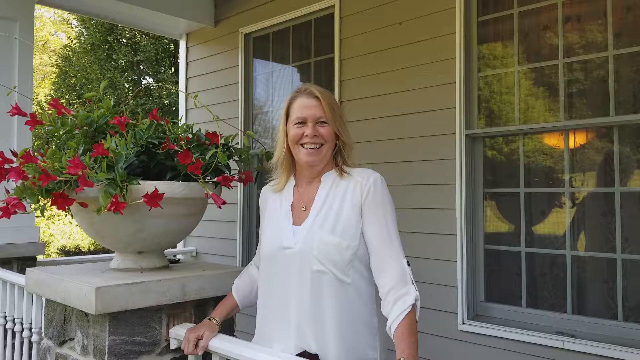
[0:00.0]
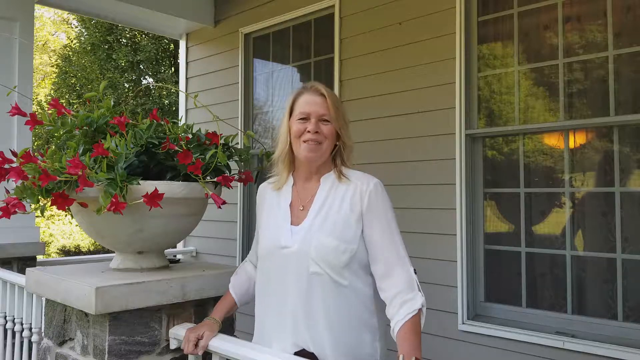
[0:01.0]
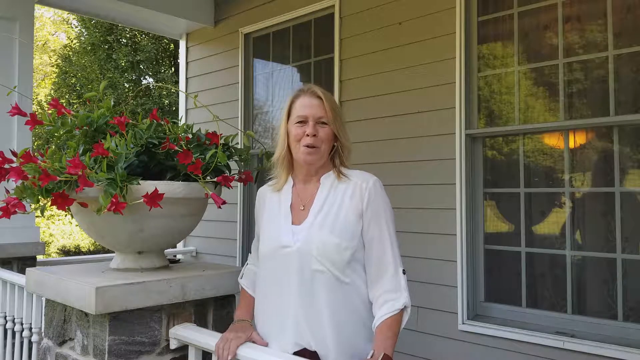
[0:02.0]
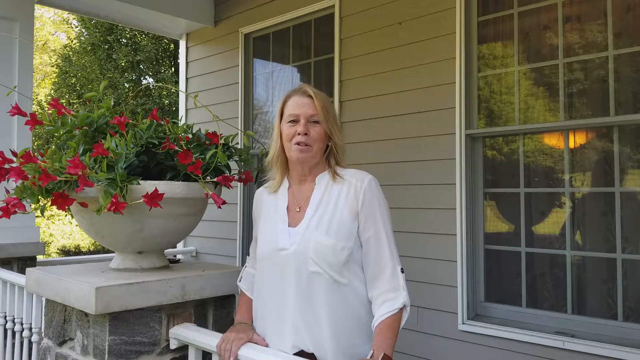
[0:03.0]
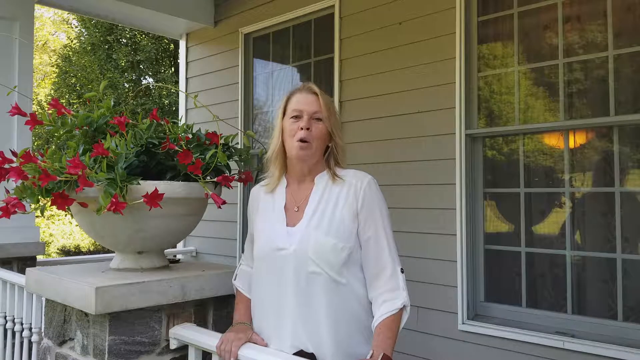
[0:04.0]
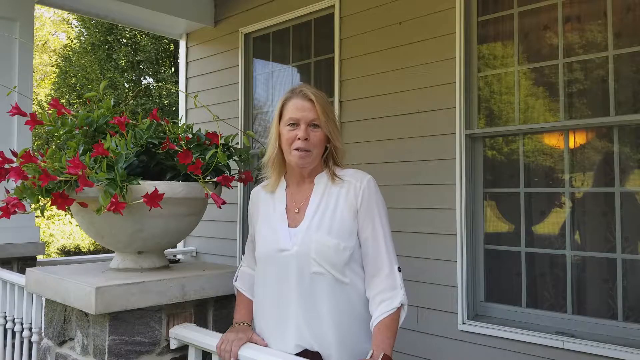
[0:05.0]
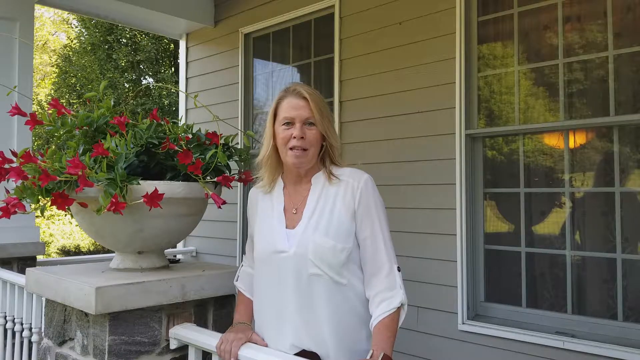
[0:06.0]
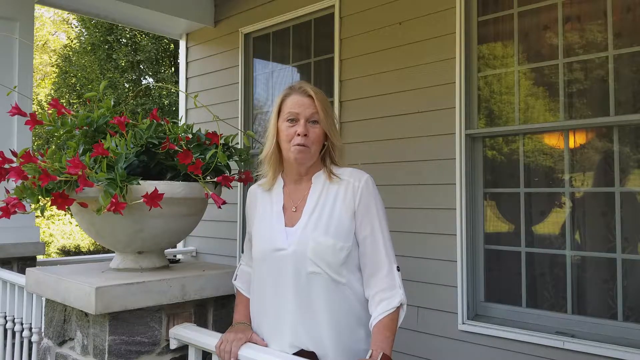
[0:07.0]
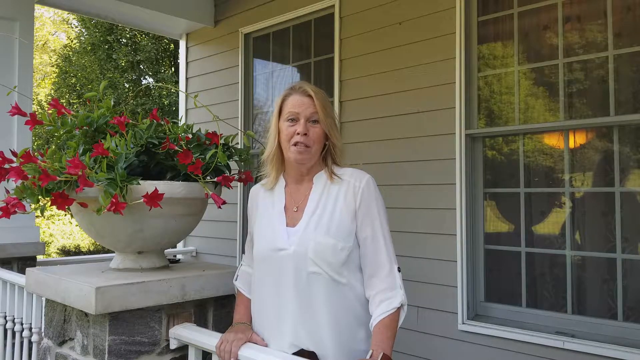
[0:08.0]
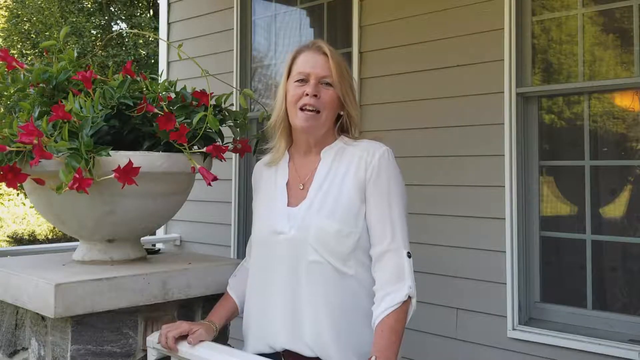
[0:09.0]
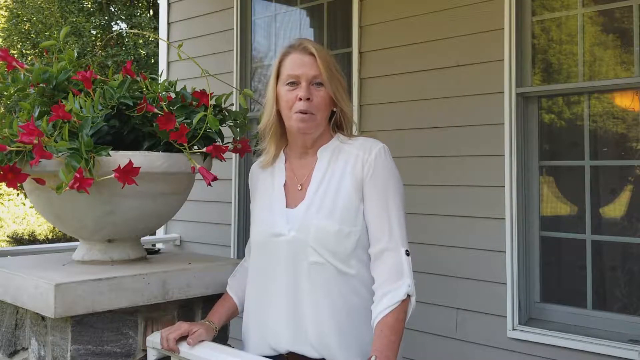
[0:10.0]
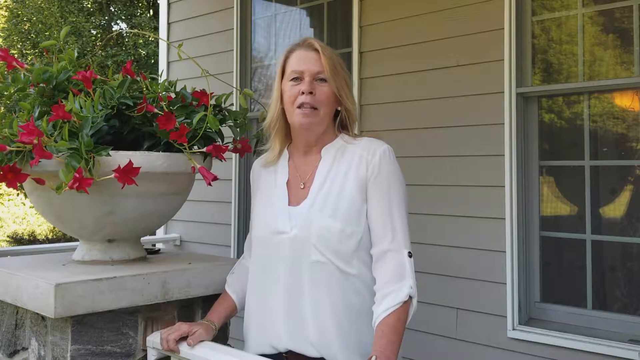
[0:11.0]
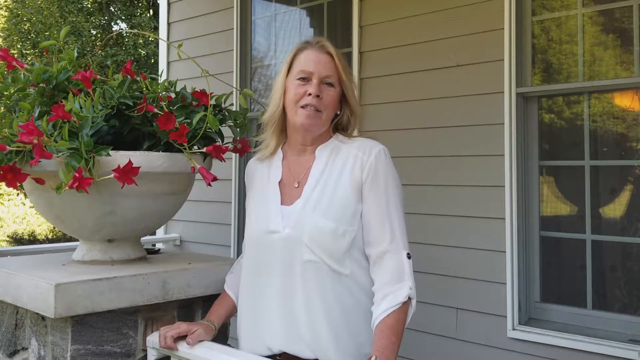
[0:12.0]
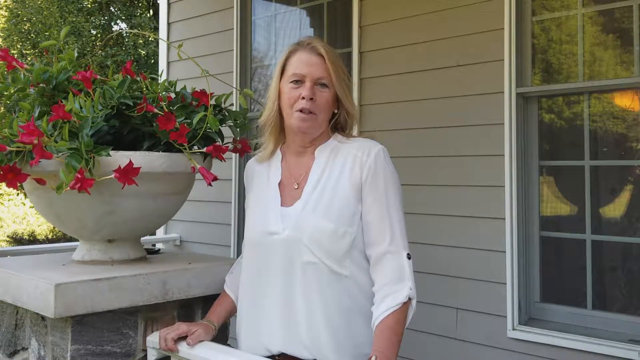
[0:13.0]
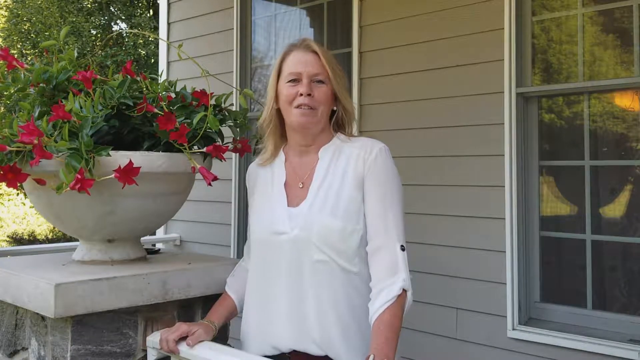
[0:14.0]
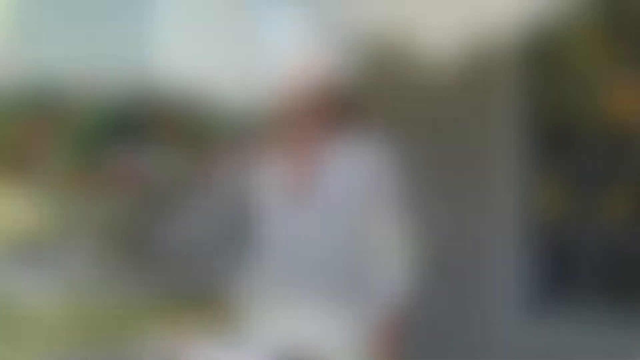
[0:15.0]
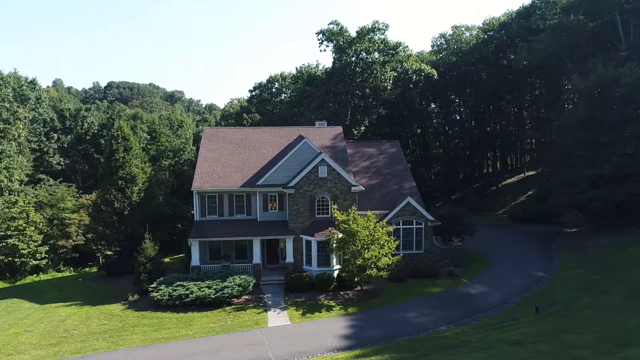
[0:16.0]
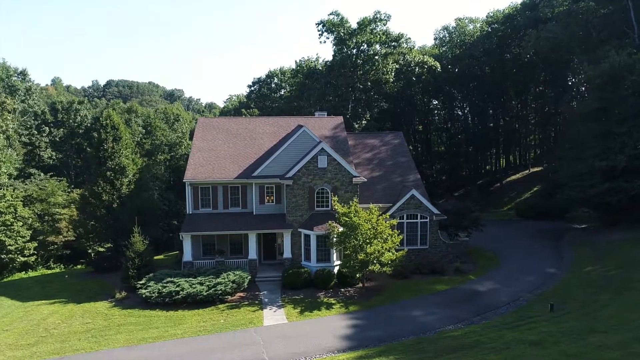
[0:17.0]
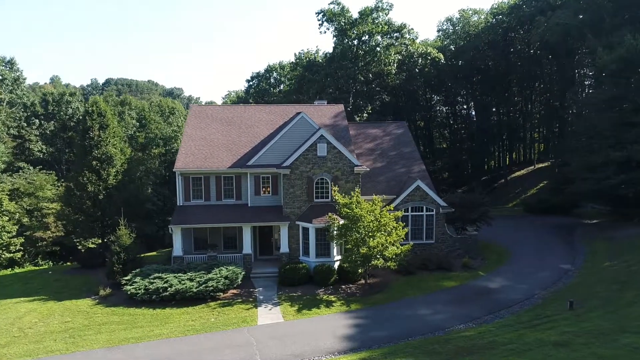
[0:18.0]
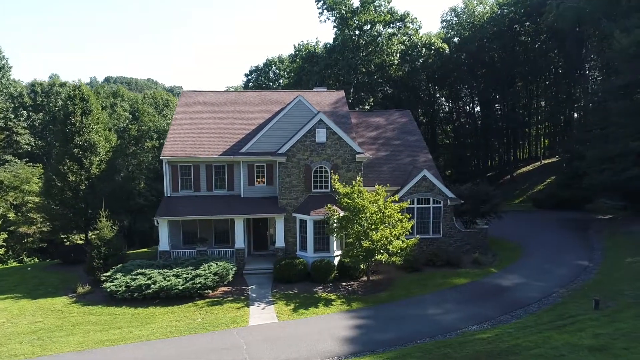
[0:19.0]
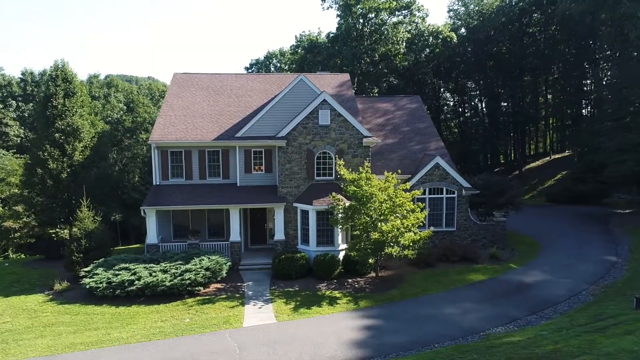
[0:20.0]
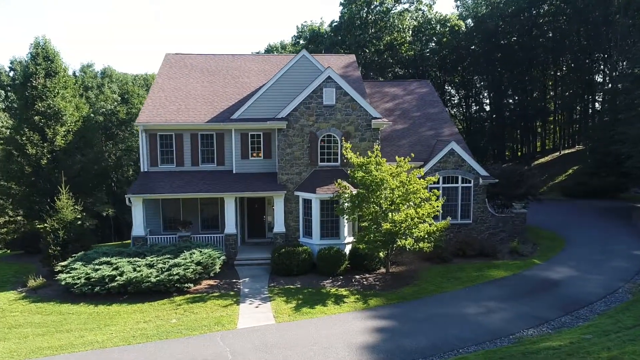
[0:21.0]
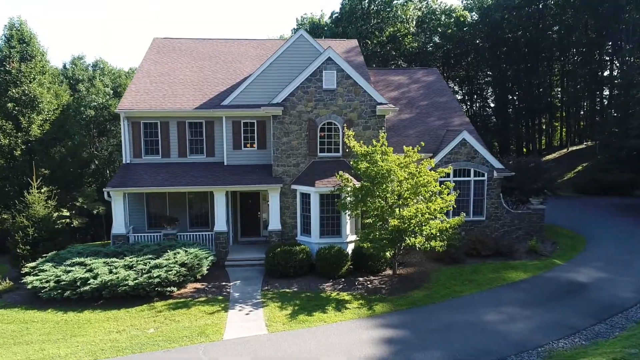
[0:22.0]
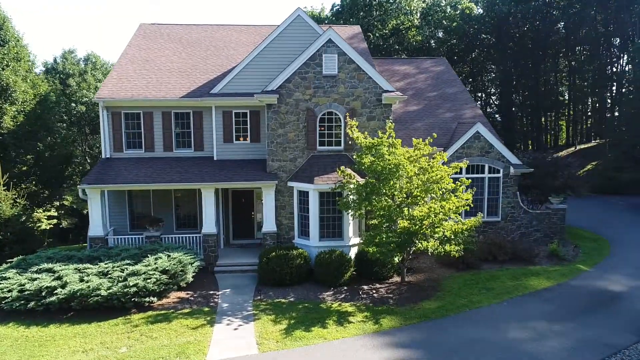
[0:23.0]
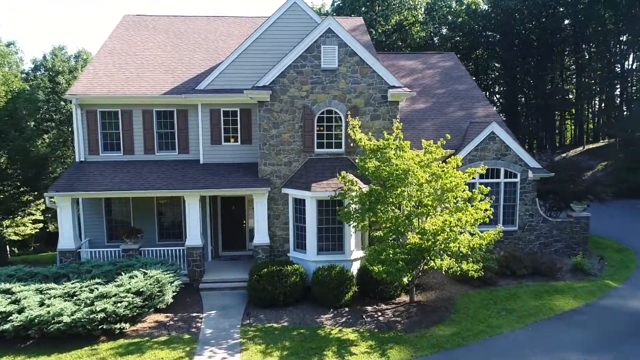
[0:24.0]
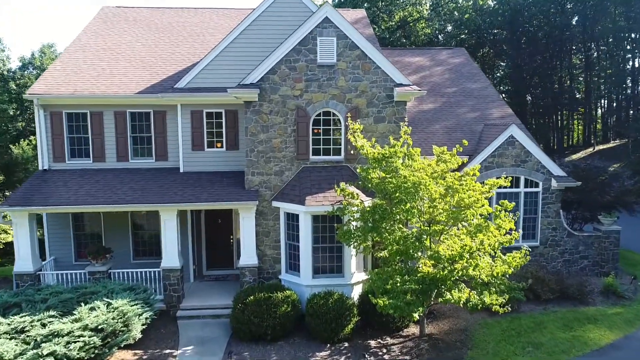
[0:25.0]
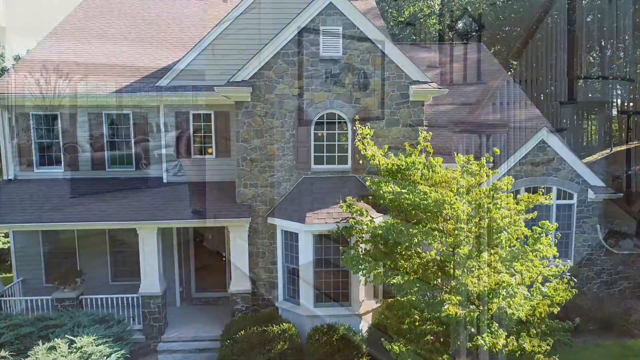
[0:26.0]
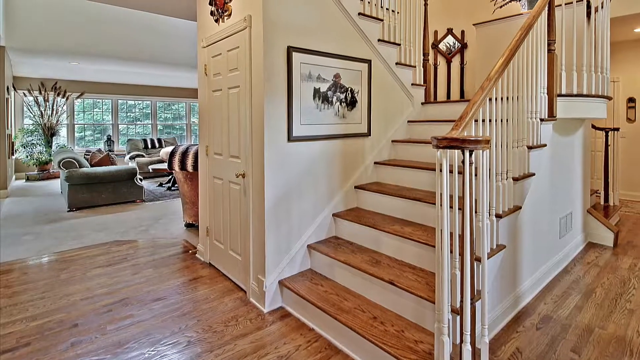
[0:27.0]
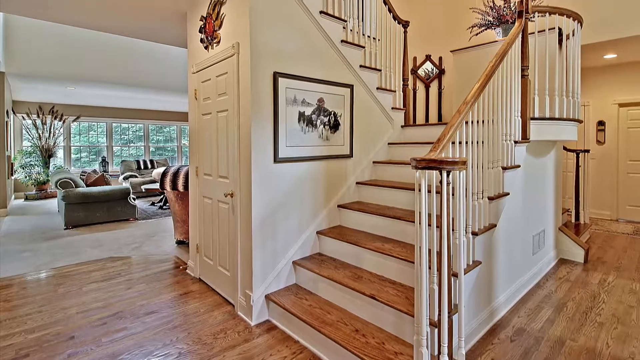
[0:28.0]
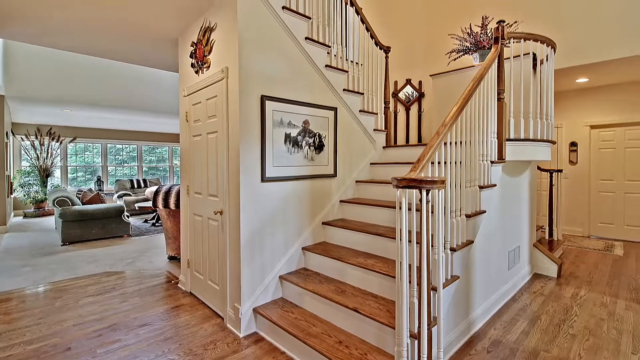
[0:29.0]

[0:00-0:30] A smiling woman with blondish hair, wearing a white outfit and a necklace, appears to be talking, possibly about a product; no microphone is visible. There is a bowl and a white flower pot holding red flowers, not necessarily roses, and a lot of green. The setting looks like the outside of a house, on a deck. The house is kind of a peach-gold, light brown colour, and a window reflects some trees; there may be a fireplace going inside, though this is unclear. The shot is mostly focused on her and the windows of the house. Then a drone-like view shows a lot of green, with many trees surrounding the house, mostly at the back, while the view stays on the front, where there is a small tree and a bush. The house is two stories, maybe three, though it looks more like two; it is a rich person's home, possibly with a circle driveway, and the setting almost looks like Colorado. The camera focuses in deep toward the house, which is purple, white and gray brick. The scene then moves inside the house to tan stairways.